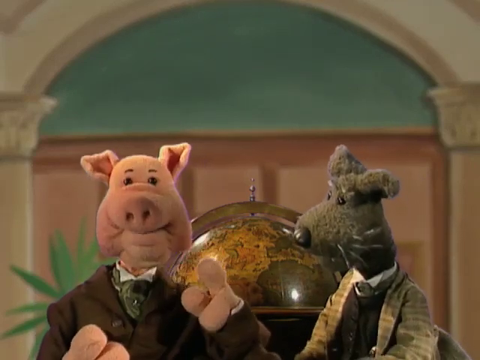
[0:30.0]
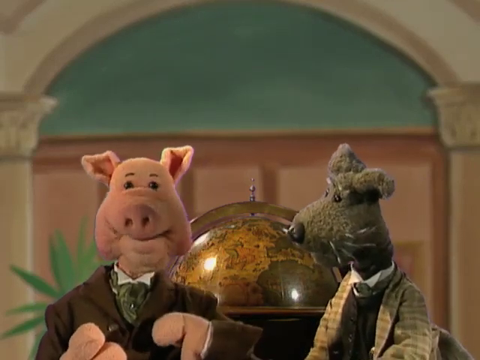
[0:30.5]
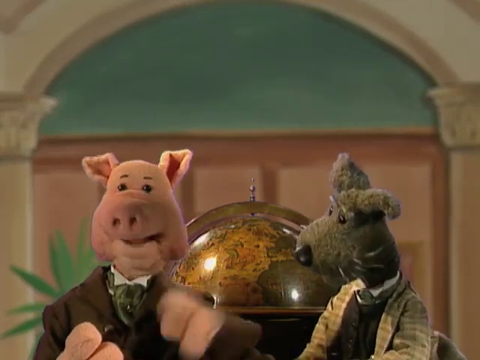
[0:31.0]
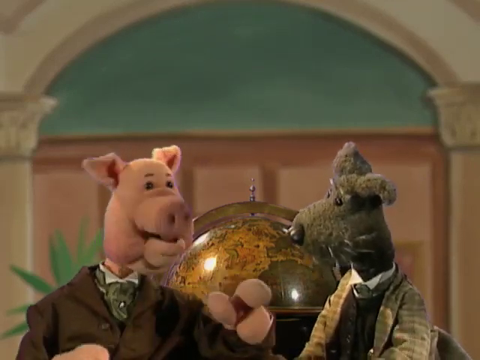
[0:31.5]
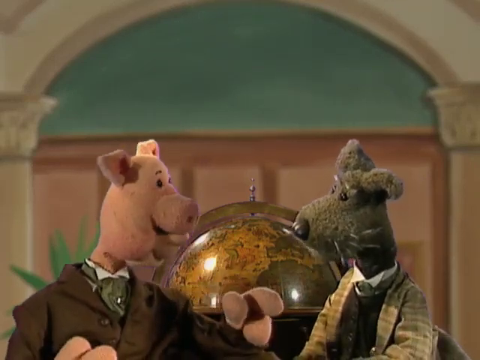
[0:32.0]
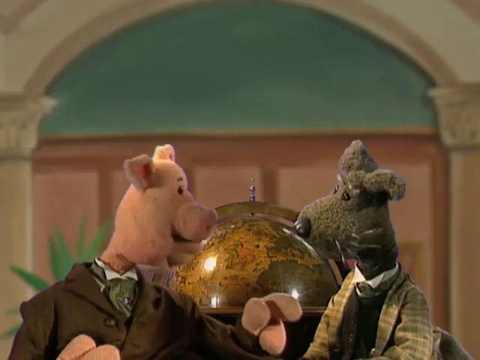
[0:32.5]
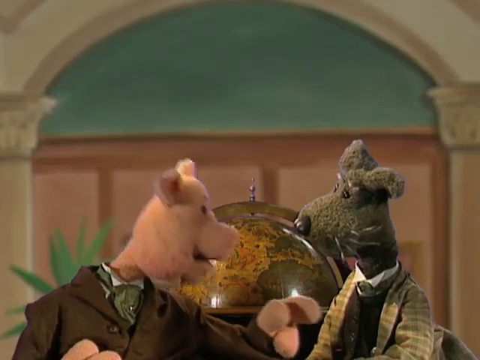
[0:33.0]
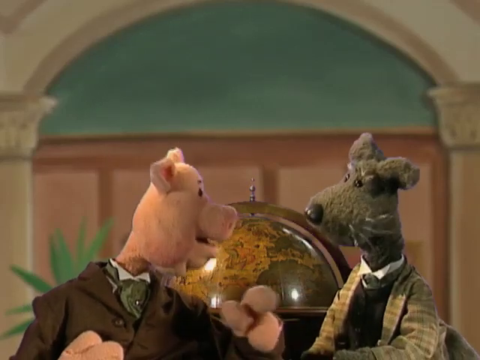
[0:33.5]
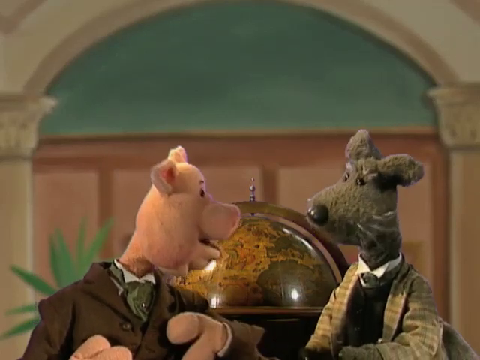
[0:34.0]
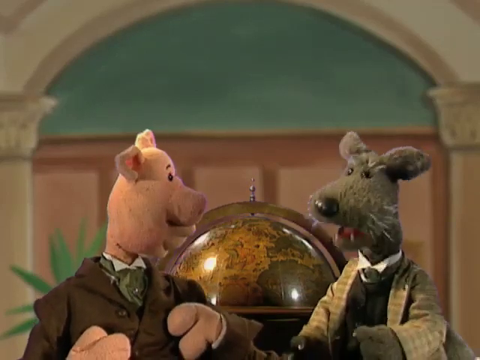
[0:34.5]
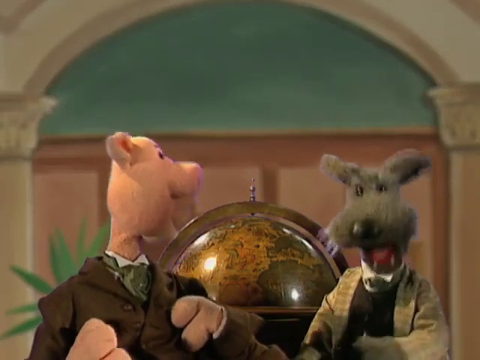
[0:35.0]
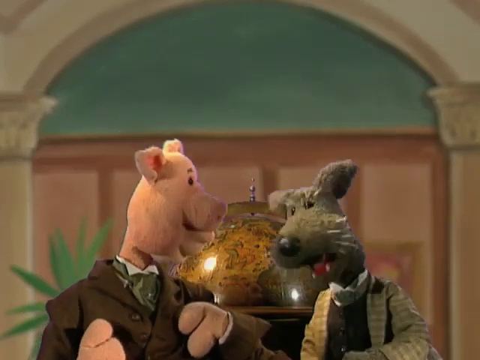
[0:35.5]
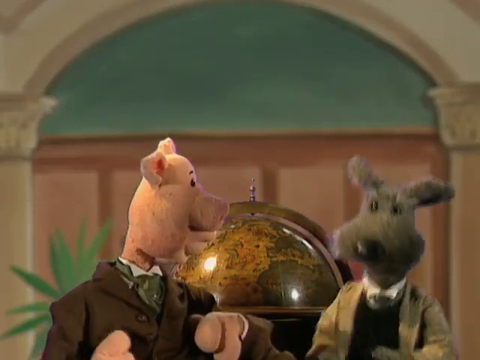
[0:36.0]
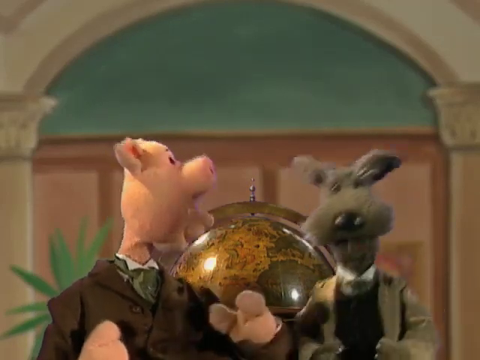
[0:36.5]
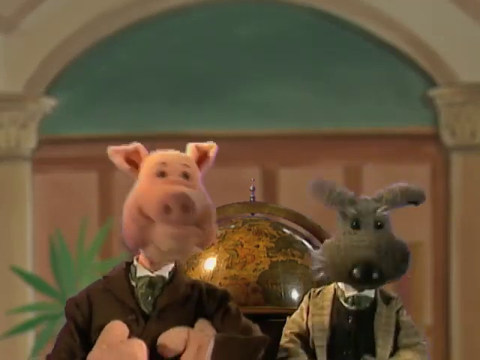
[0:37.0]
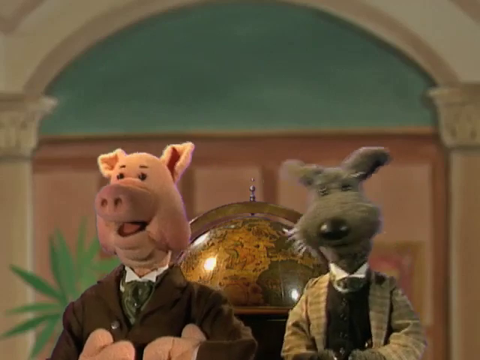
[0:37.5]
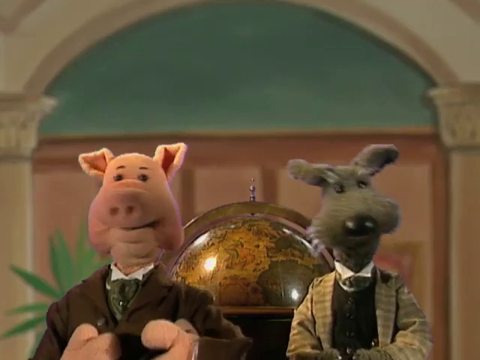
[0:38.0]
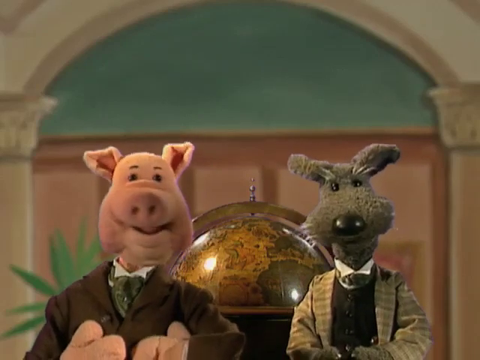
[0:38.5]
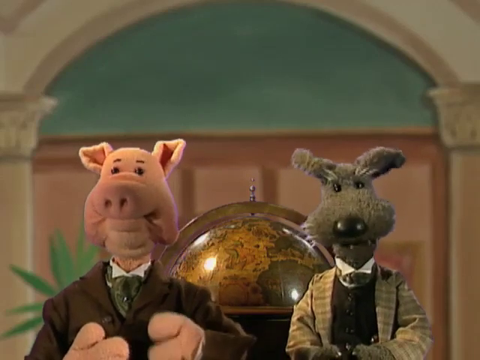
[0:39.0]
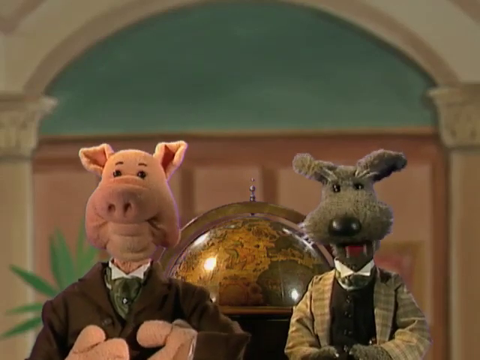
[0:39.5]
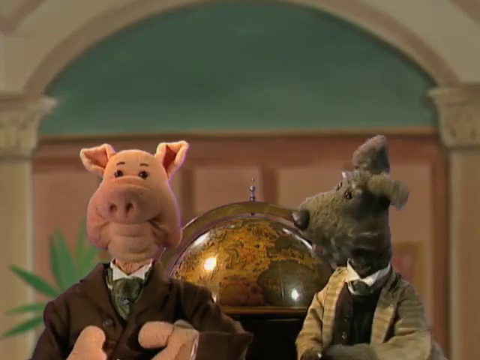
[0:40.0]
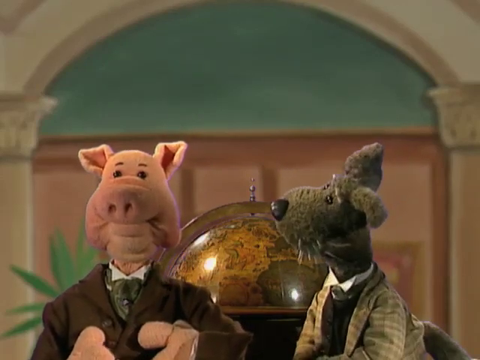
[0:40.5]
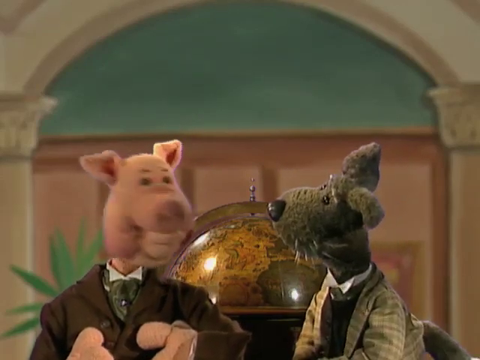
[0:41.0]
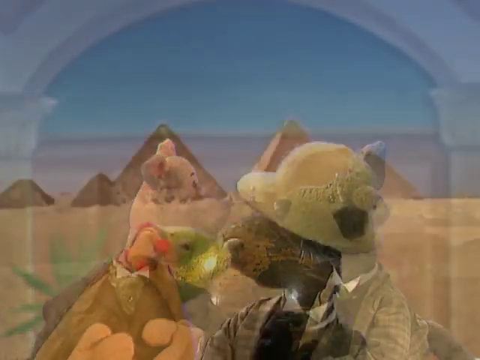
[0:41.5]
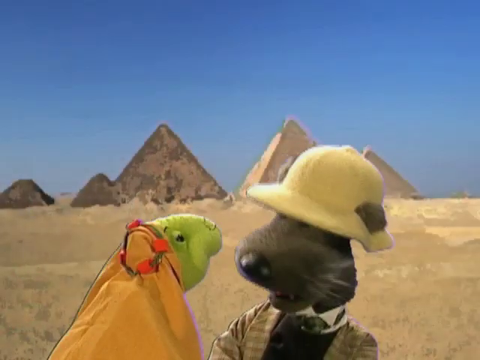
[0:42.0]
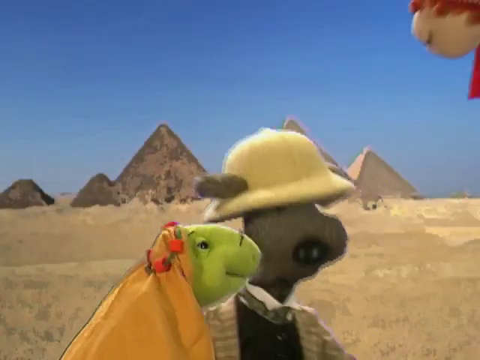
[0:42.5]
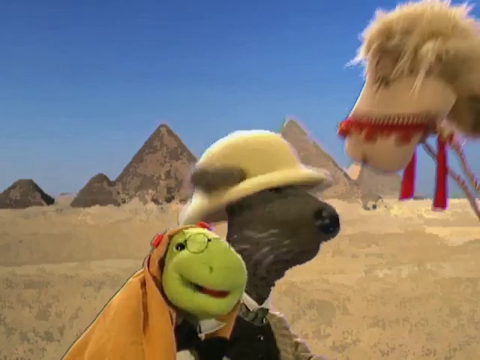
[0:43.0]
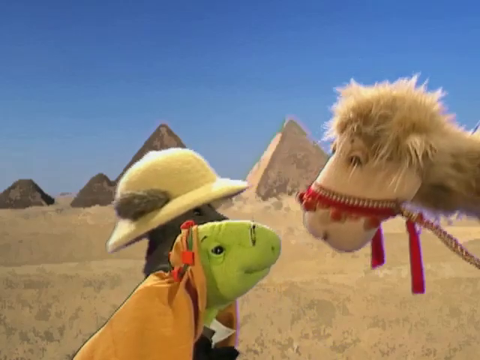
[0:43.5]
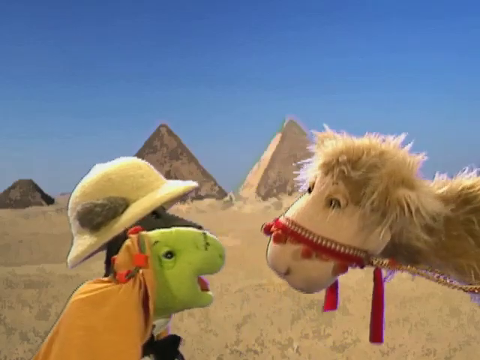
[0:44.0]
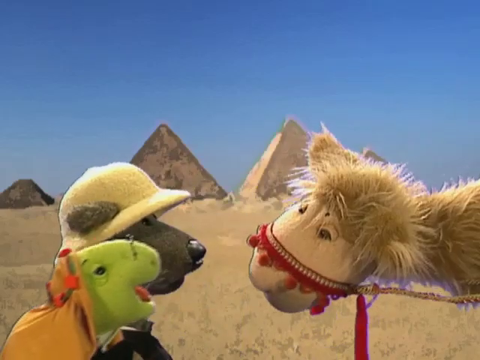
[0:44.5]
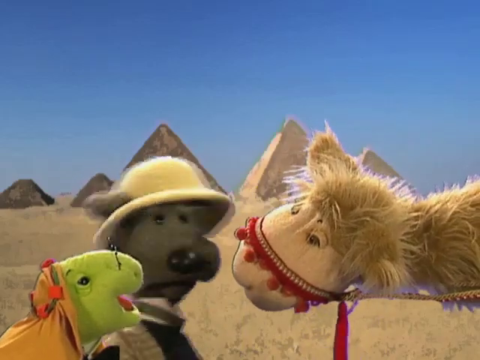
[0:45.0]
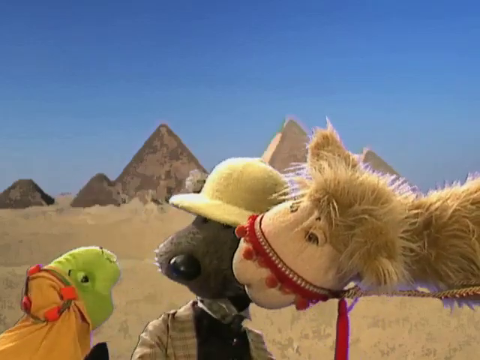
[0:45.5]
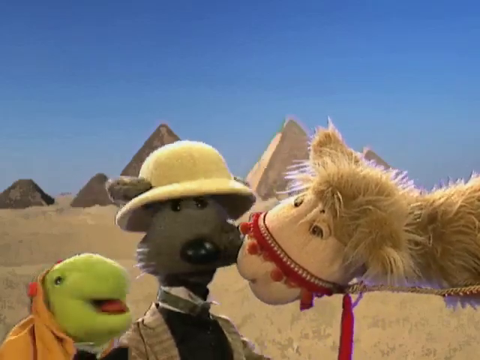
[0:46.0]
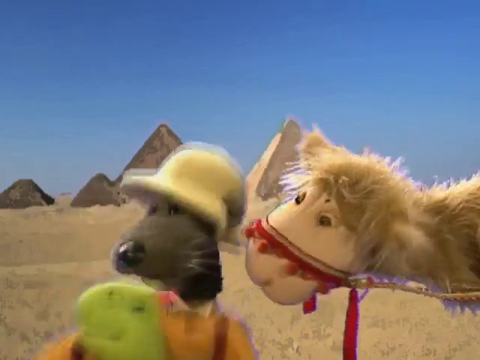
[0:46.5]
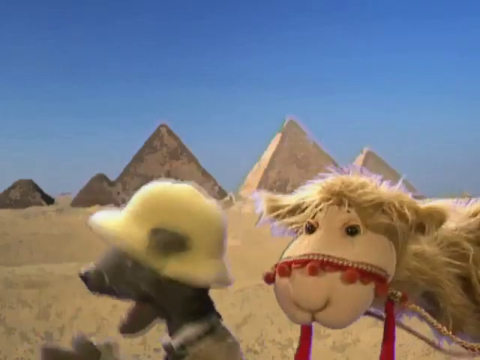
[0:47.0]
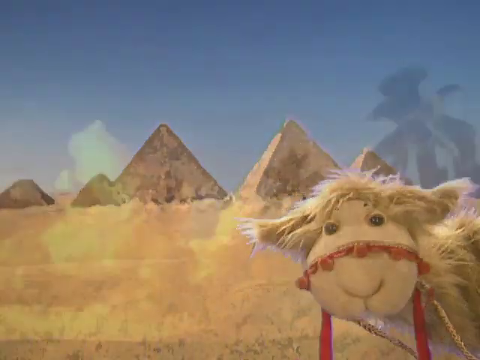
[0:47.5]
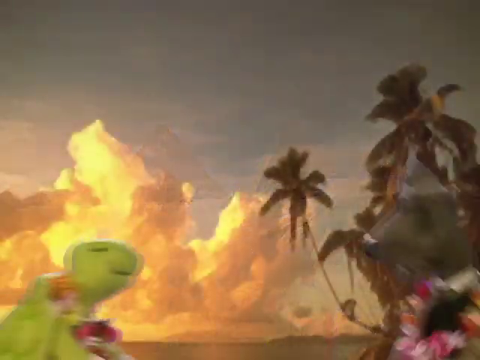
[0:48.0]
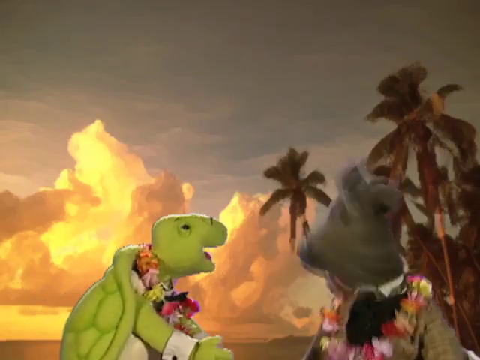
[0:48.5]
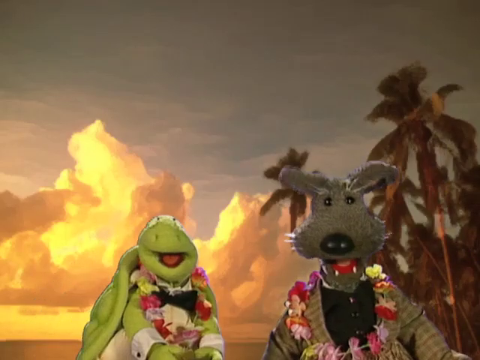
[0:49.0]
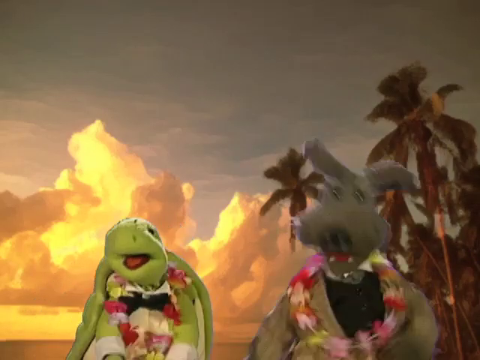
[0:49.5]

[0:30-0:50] Two puppets, a pig on the left and a dog on the right, both wear dress clothes from the neck down. Behind them is a large globe, and behind the globe is a nondescript background. The pig points toward the dog, and the dog nods its head numerous times, seemingly in agreement. It starts to move up and down and the pig does too, as if both are excited. The video then cuts to the dog wearing an explorer-type hat in front of an image of the pyramids. With the dog is a small turtle puppet wearing glasses. Another puppet, a camel, comes in from the right side of the screen, bends down to the height of the other two puppets and looks at them. The dog and the turtle appear scared and run out of frame. The image cuts again to the dog and the green turtle in front of a backdrop of palm trees, wearing a lei around their neck.